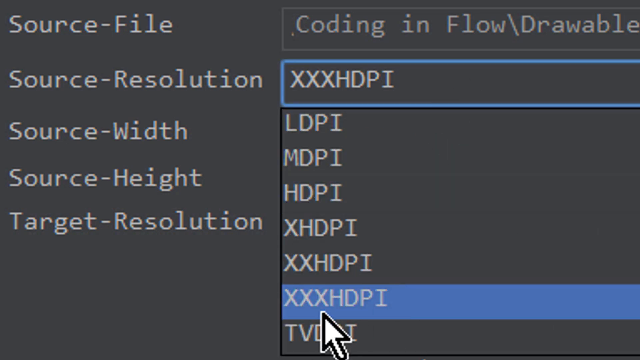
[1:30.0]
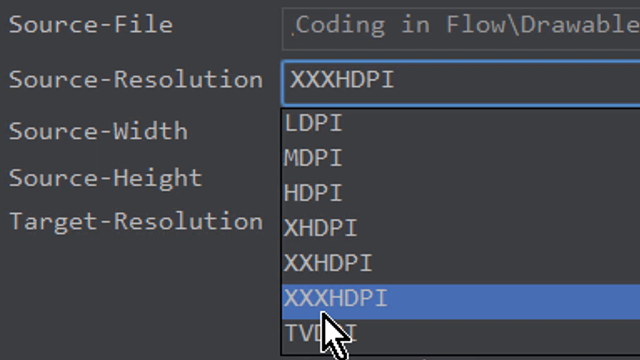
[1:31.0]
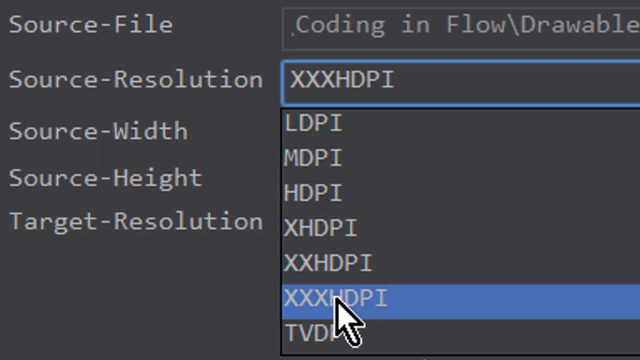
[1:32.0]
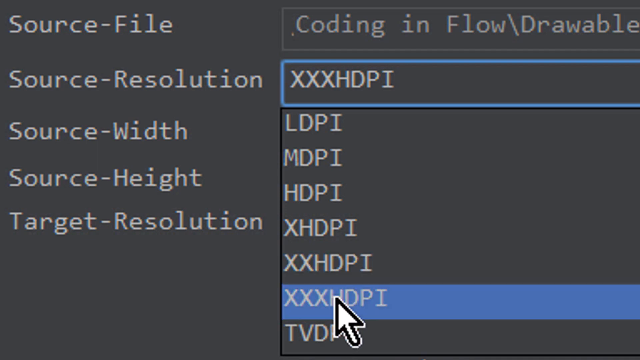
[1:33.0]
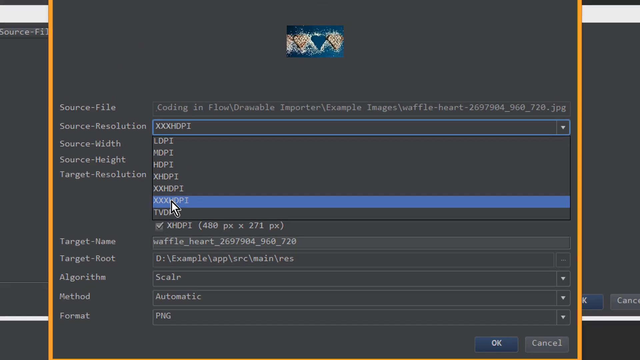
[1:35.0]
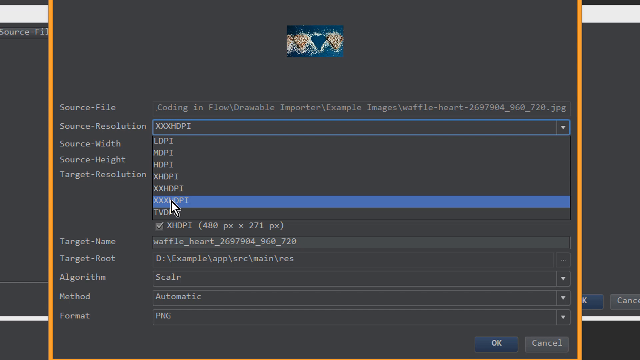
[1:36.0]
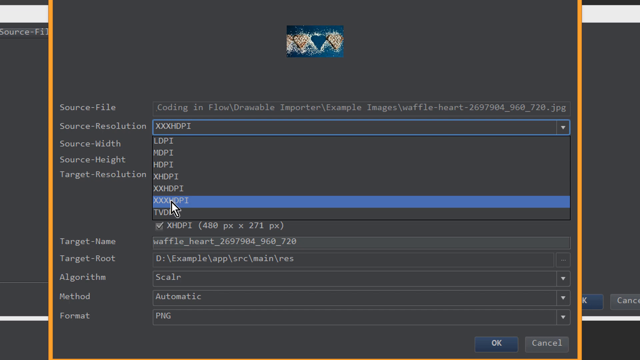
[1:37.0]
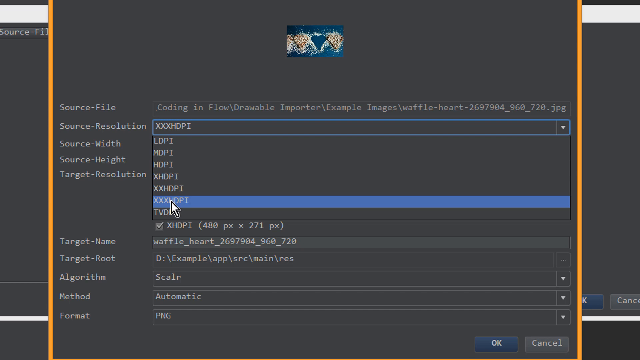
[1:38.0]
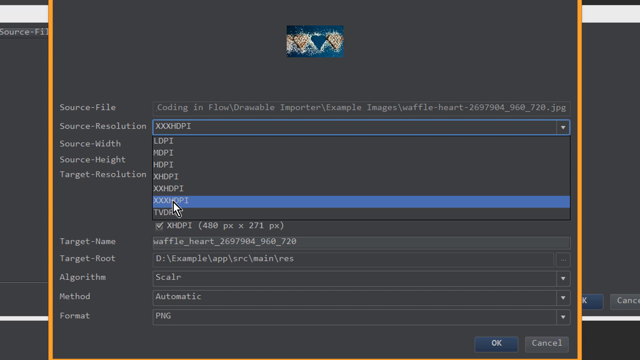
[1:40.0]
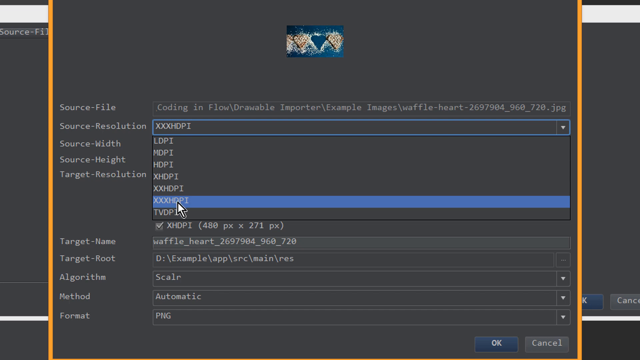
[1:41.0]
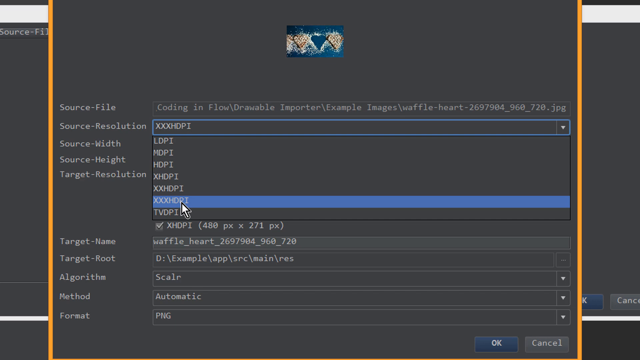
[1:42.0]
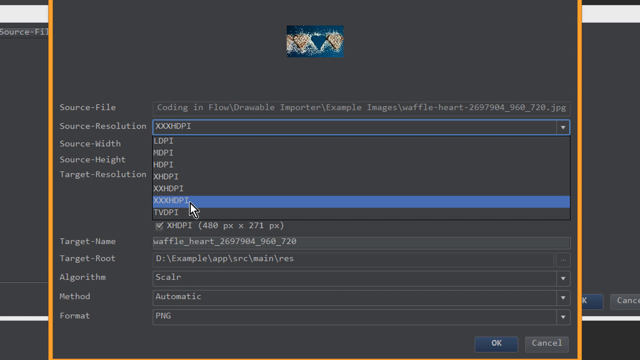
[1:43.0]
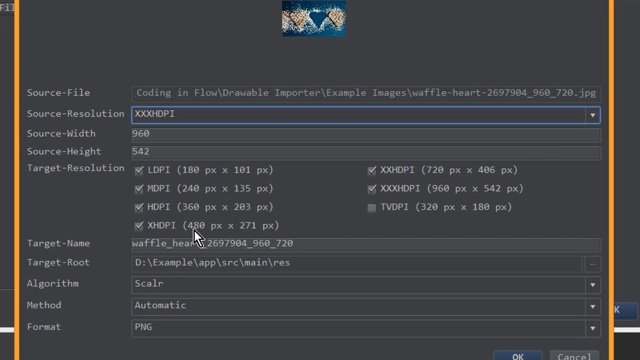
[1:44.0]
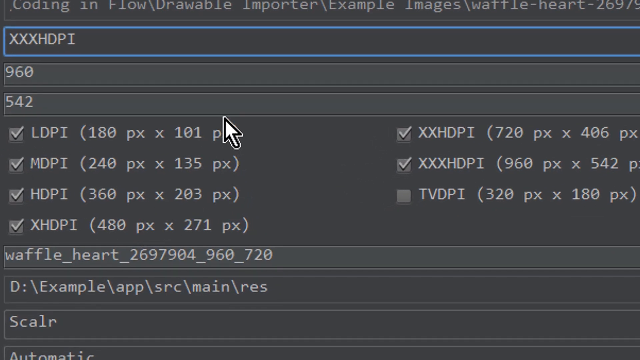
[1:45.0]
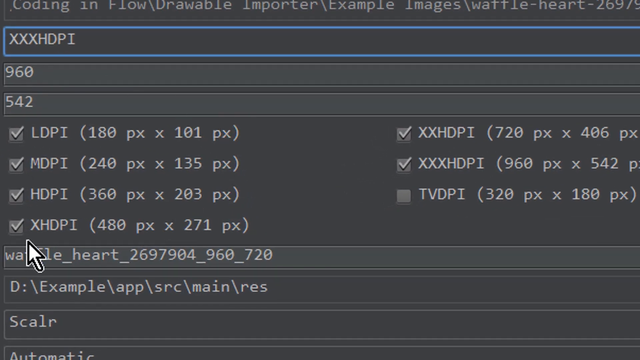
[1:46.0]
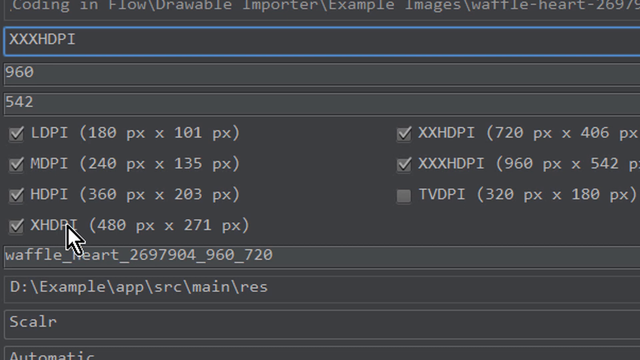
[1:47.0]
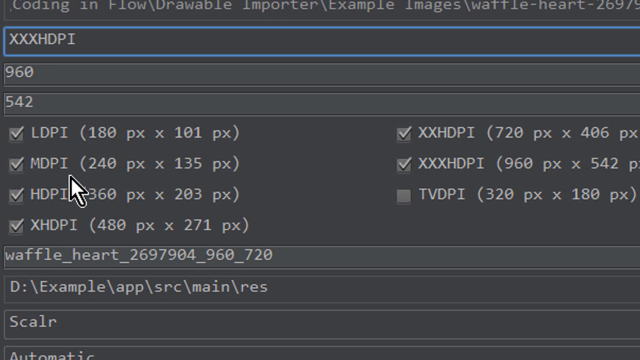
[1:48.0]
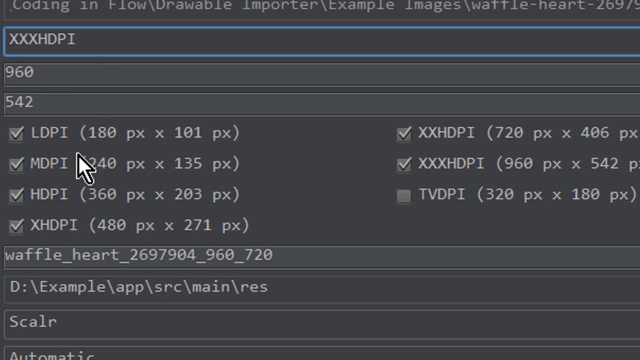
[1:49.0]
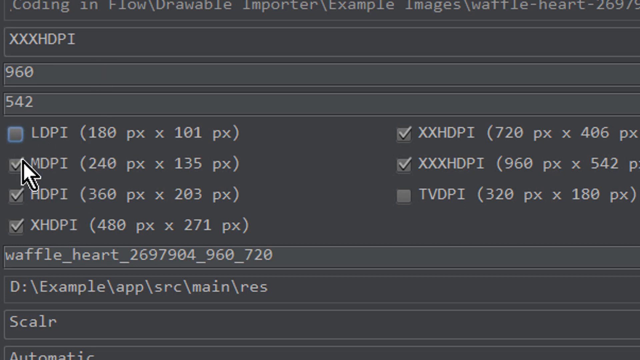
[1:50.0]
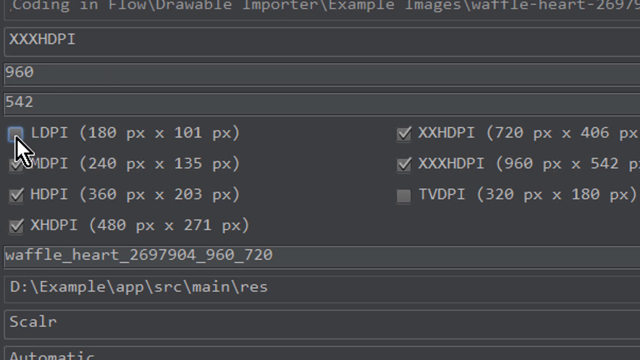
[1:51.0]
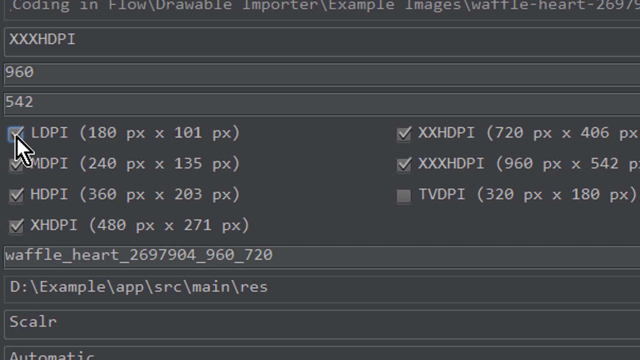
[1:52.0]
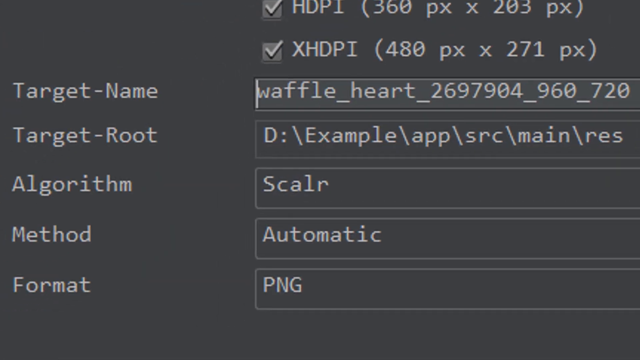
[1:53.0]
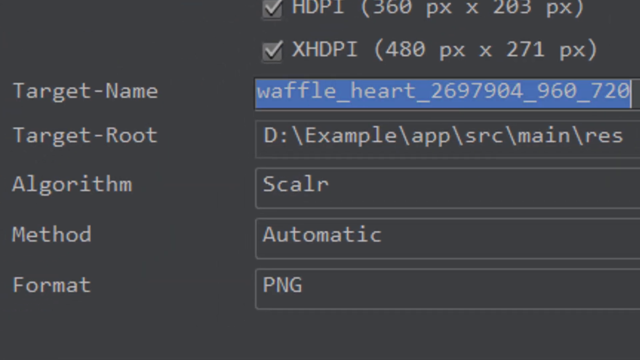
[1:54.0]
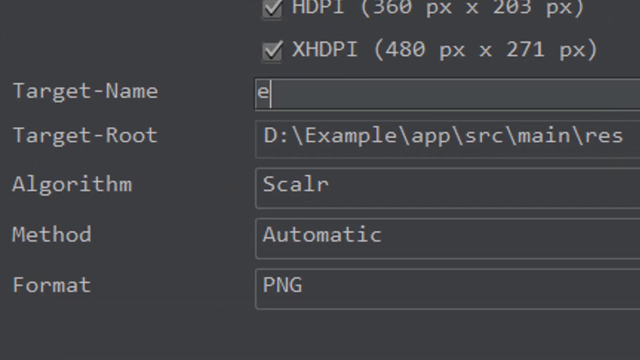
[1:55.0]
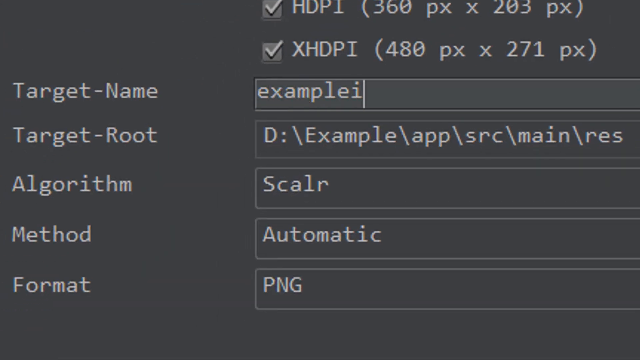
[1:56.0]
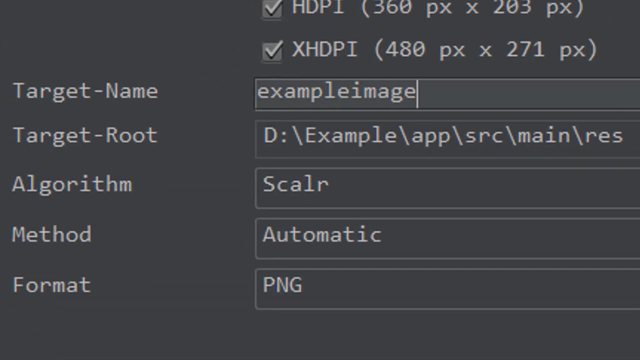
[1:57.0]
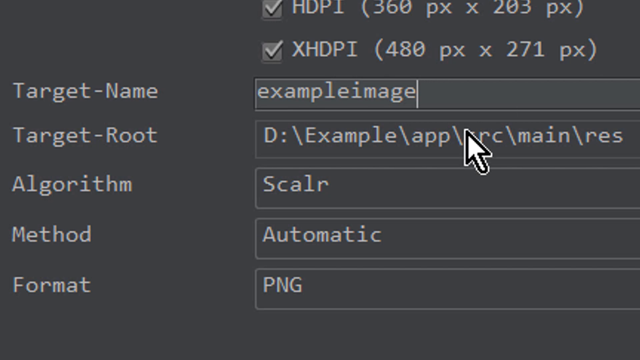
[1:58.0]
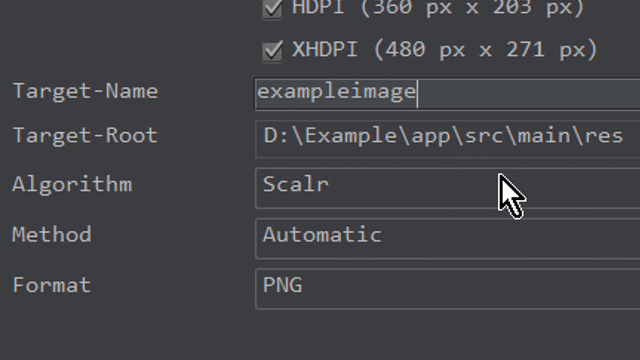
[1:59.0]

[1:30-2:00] The view is zoomed in on a dark grey screen with white text listed vertically in the top left corner: "Source File", "Source Resolution", "Source Width", "Source Height", "Target Resolution". Alongside Source Resolution, the box the user has clicked is highlighted with a blue outline and contains white text reading "XXXHDPI", with a list of alternative options underneath. The user scrolls down with the mouse, and the camera zooms out while the mouse still hovers over some of the options. The user keeps hovering over the option already selected and clicks it, so the setting stays at XXXHDPI. The user then hovers the mouse over the different resolutions, which are all ticked in boxes in the middle of the screen, unselects the LDPI box, and then re-enables it. The view zooms in toward the lower part of the screen, where more white text is listed vertically: "Target name", "target route", "algorithm", "method", "format". Inside the target name box, which reads Waffle Heart with some numbers, the user highlights the text in blue, deletes it and changes the name to example image, written as one word.